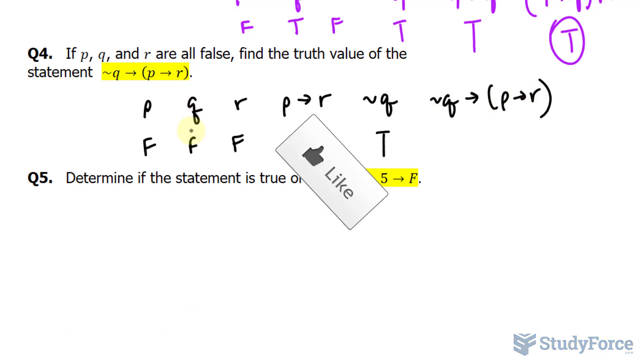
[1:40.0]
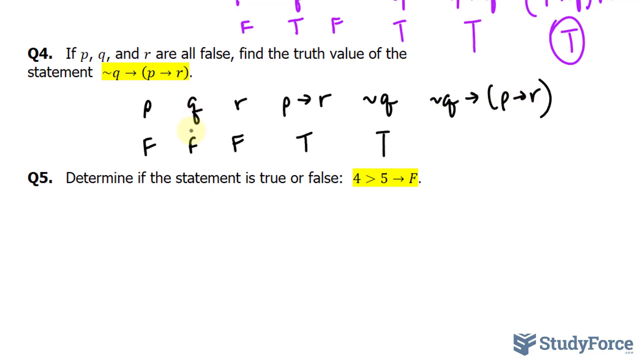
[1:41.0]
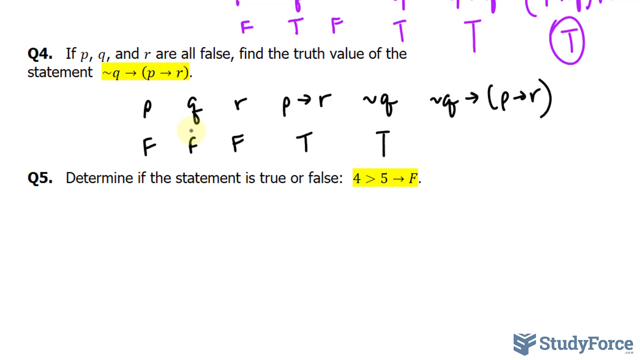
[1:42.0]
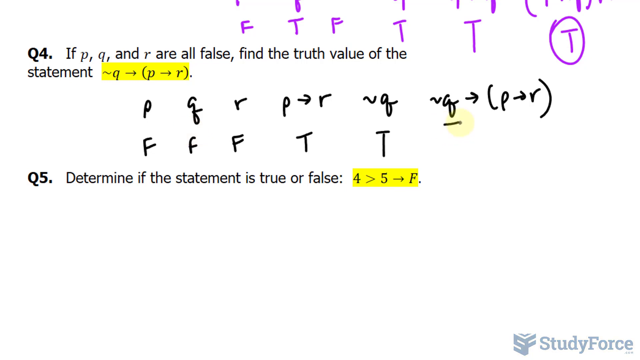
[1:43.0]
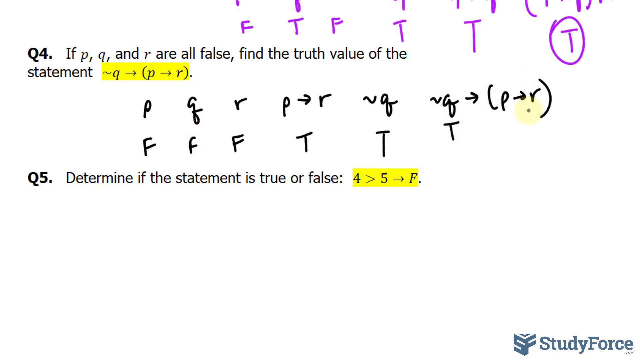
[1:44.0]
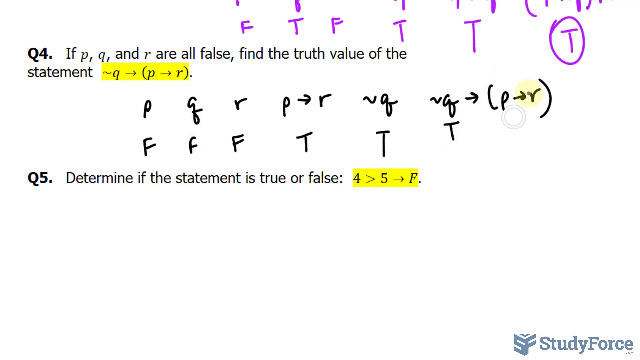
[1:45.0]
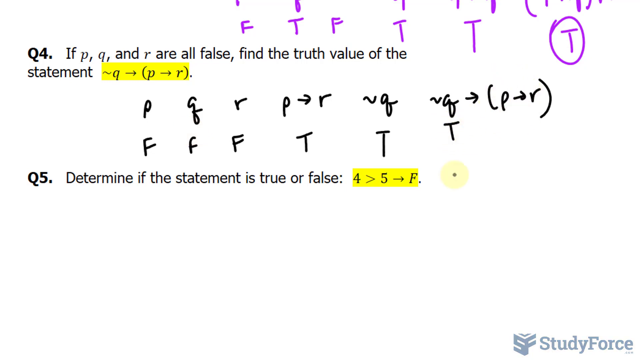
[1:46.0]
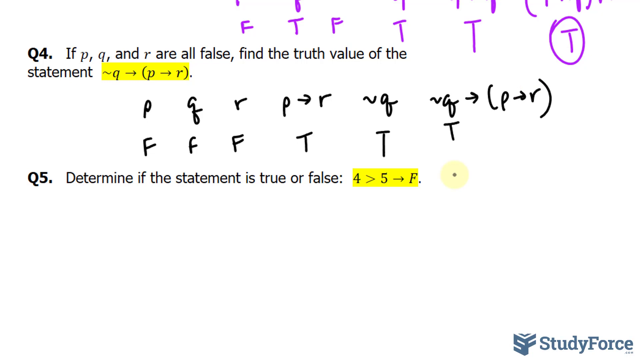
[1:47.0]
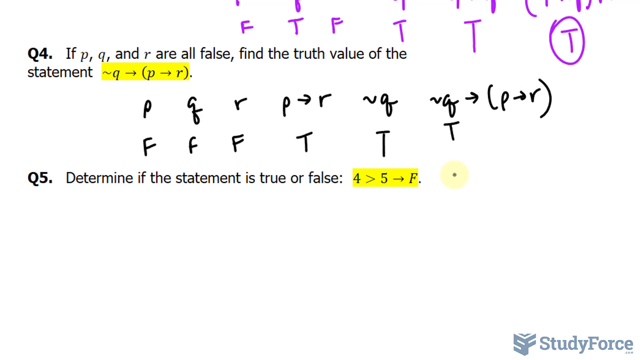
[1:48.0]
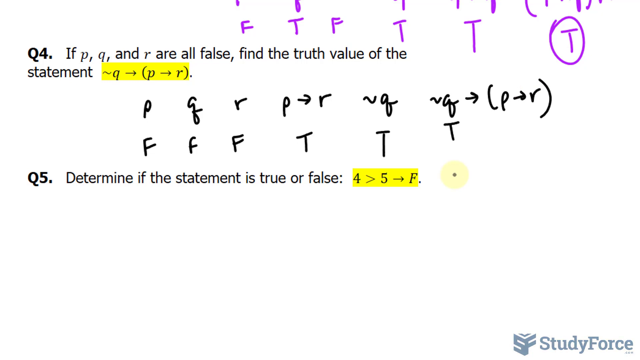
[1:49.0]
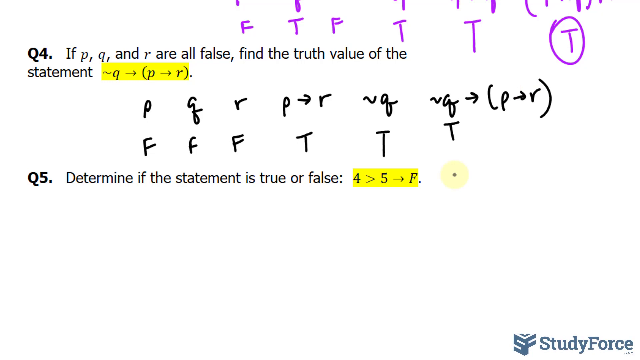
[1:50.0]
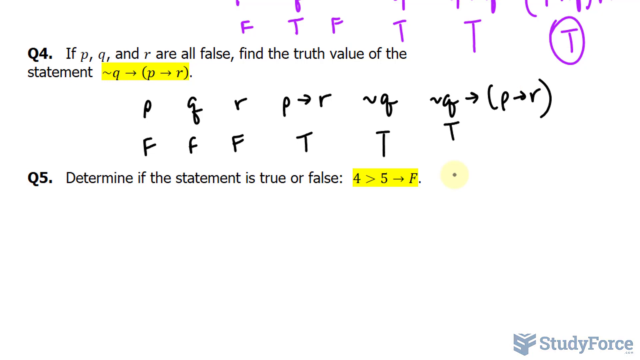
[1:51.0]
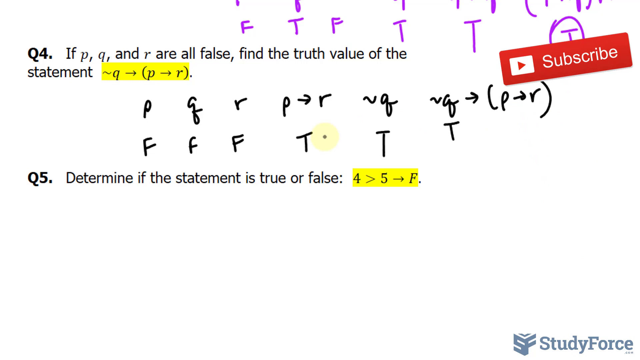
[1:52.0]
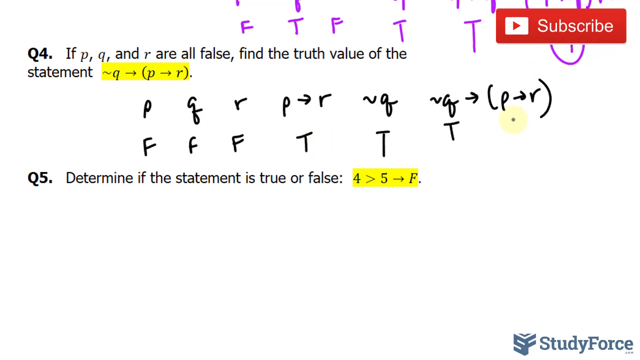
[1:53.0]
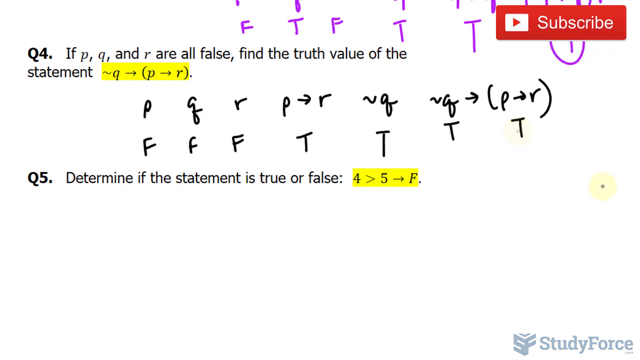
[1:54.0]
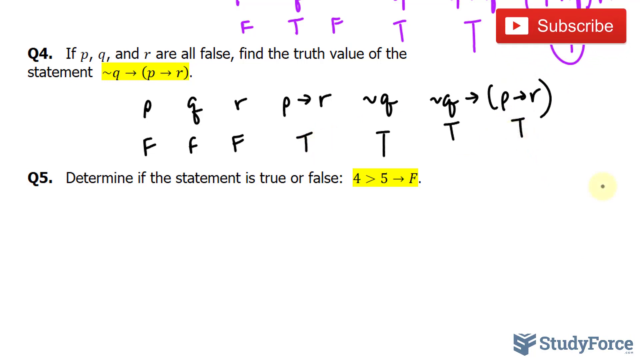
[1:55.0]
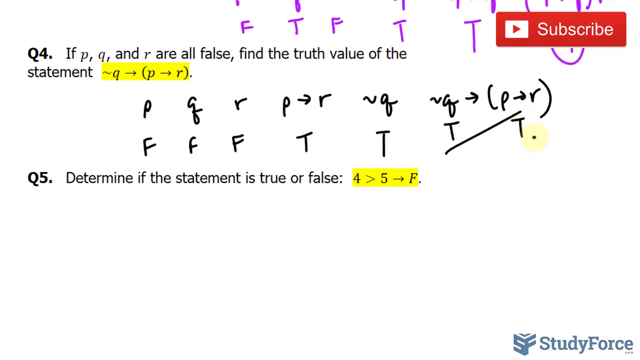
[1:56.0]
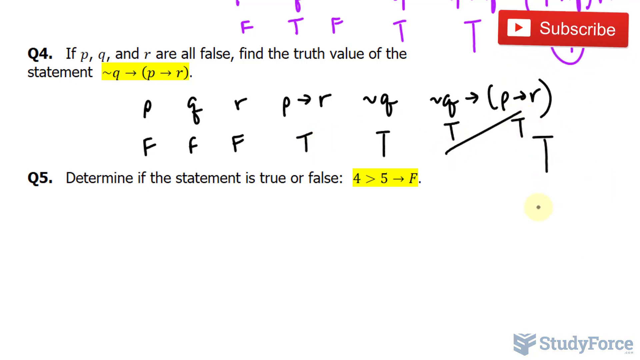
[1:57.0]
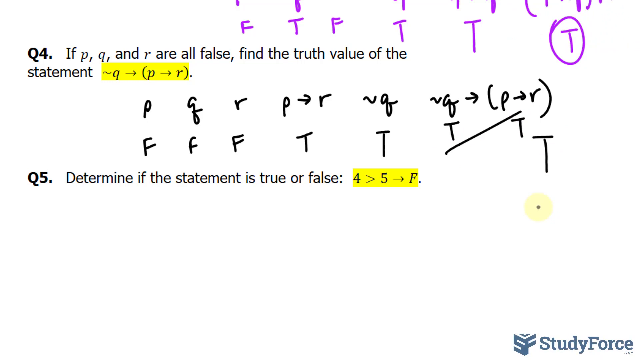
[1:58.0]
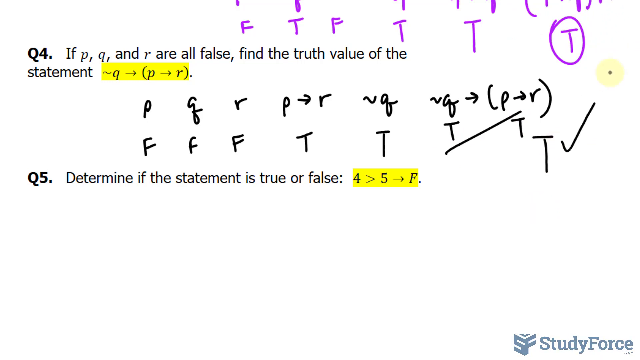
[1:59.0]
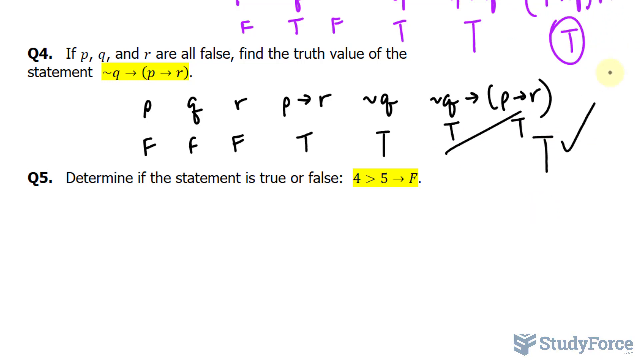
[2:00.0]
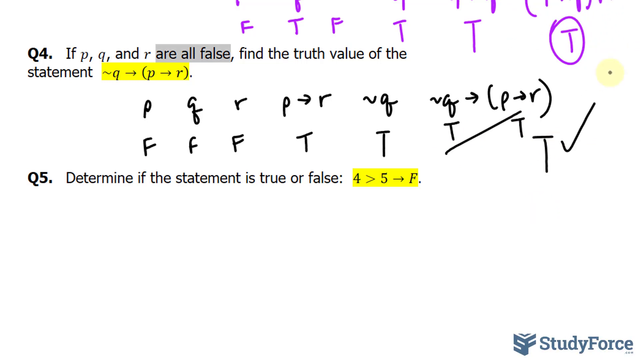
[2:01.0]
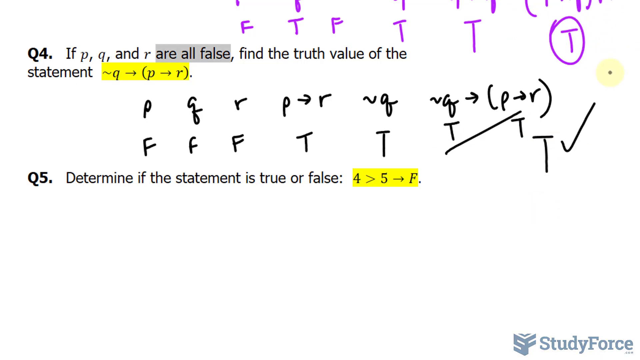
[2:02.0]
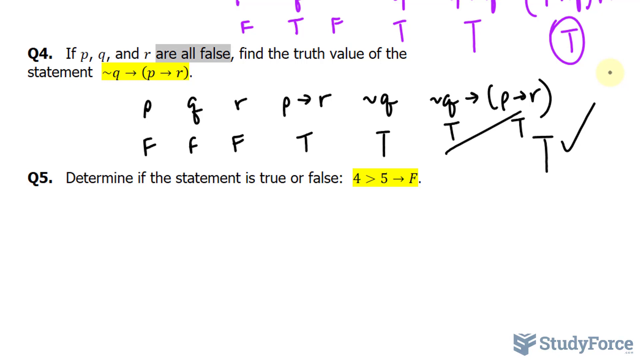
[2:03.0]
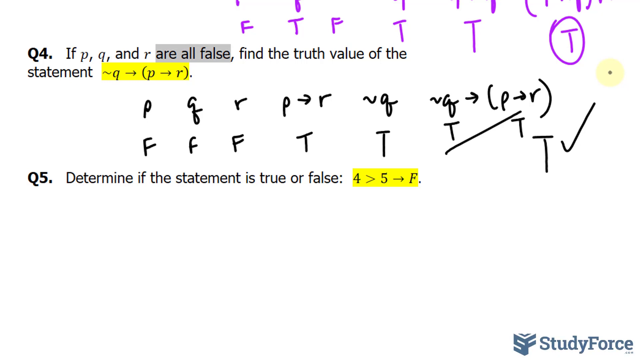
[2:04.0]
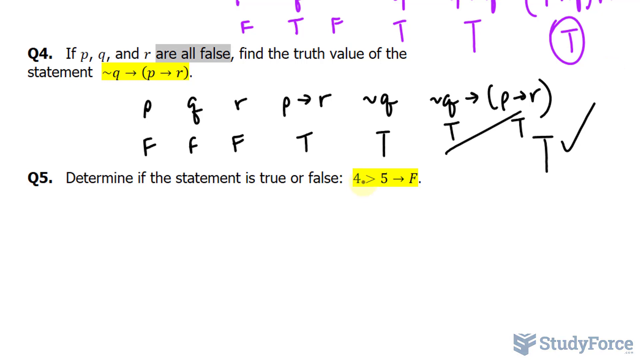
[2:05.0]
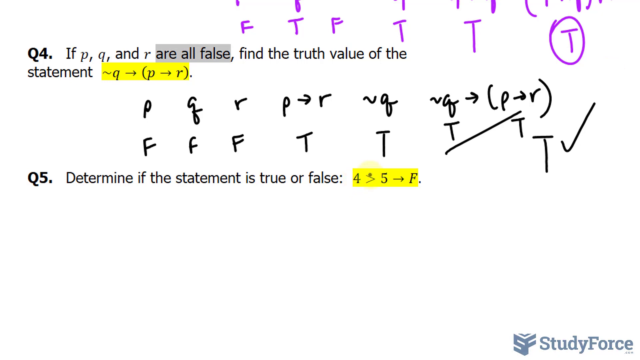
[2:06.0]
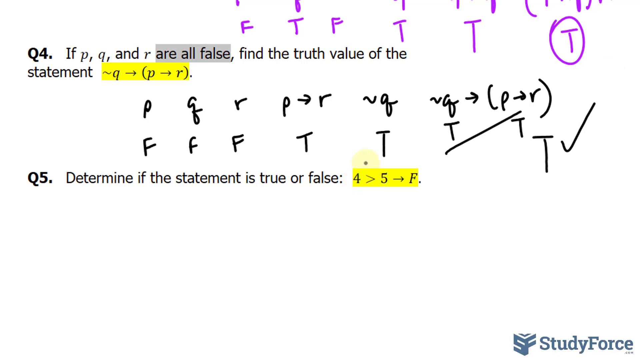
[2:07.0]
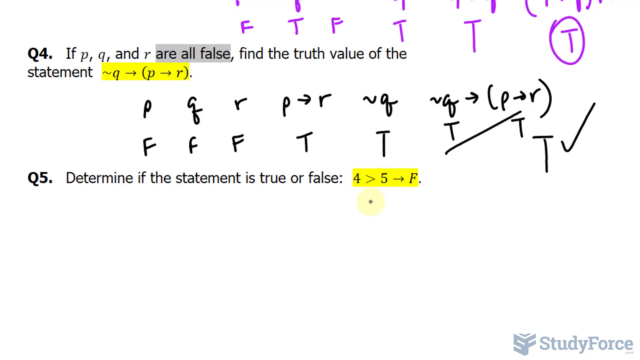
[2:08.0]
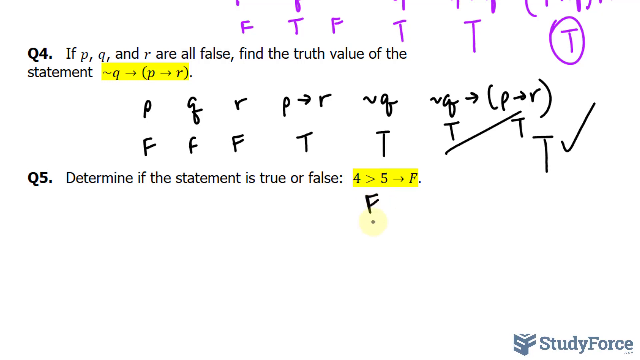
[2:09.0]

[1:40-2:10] A rectangular banner containing a thumb icon and the word "like" written in gray rotates, moving from the bottom left corner of the screen to the top right corner and leaving the frame. The cursor then moves from the left half of the frame to the right half and, once it reaches its final position, writes the letter T in black virtual ink. It continues to move and then stops for a few moments next to Q5. An elongated rectangular banner then appears in the top right corner of the screen with the word "subscribe" and the YouTube logo inside; the word "subscribe" has a white background and the banner has a red background. After a few moments the banner rotates and moves to the right, out of the frame.